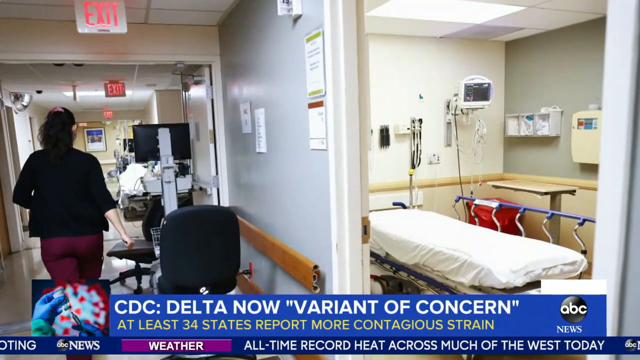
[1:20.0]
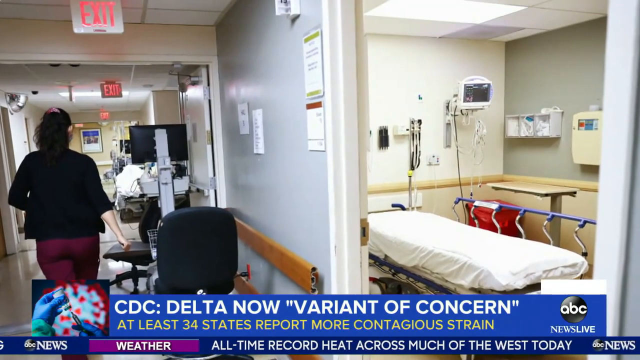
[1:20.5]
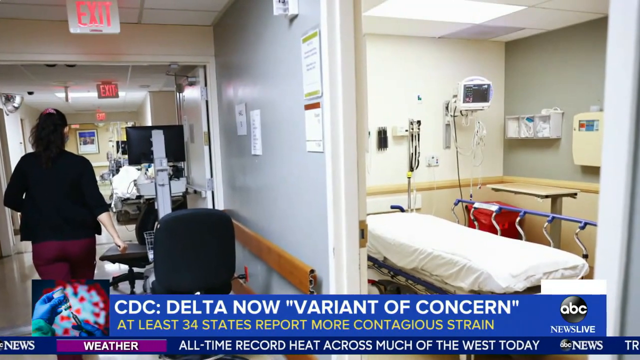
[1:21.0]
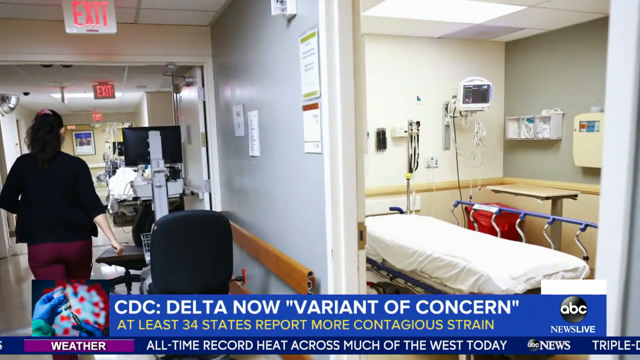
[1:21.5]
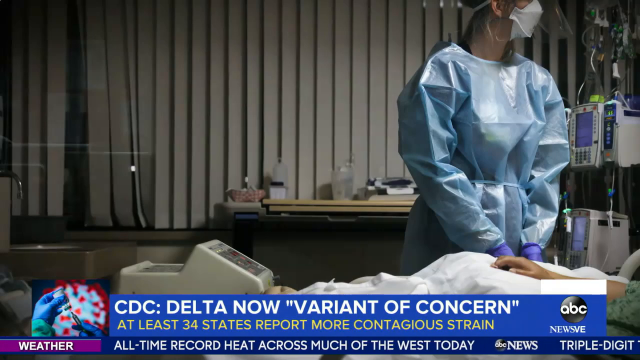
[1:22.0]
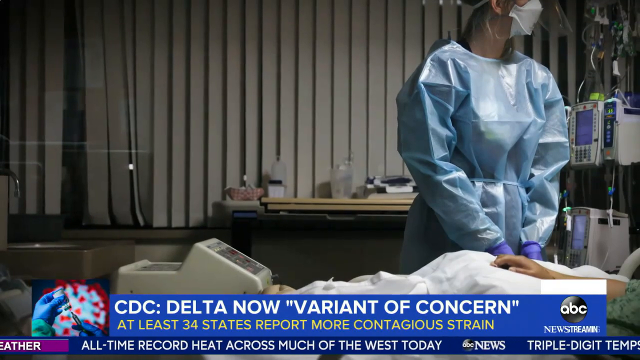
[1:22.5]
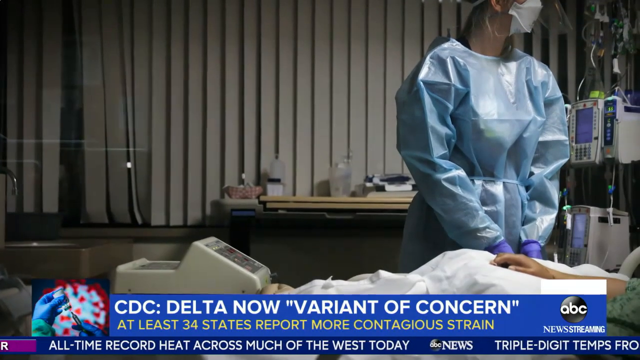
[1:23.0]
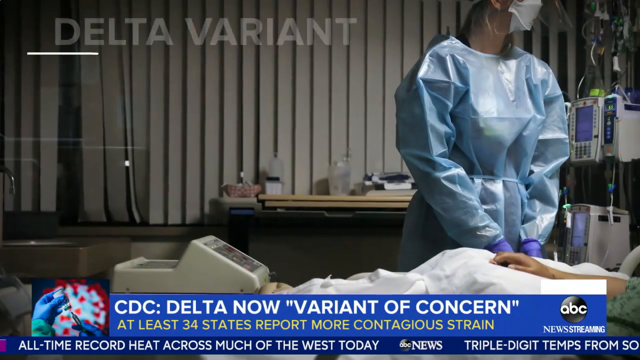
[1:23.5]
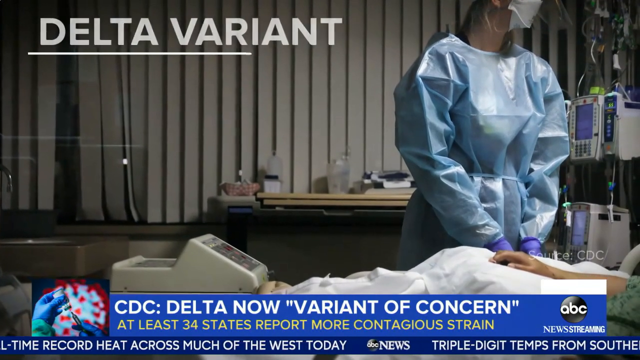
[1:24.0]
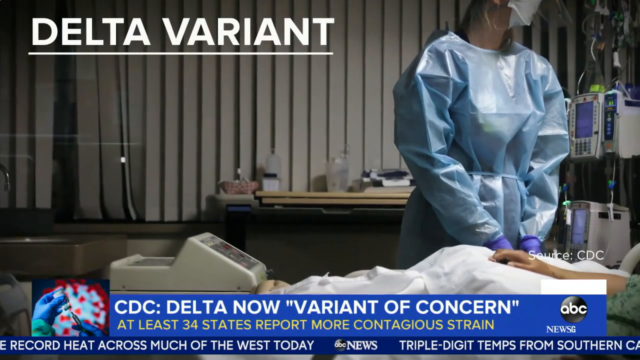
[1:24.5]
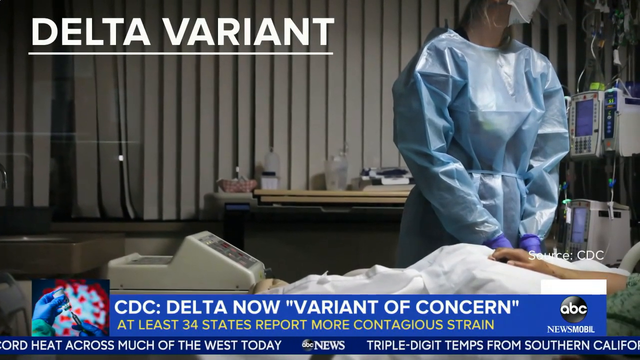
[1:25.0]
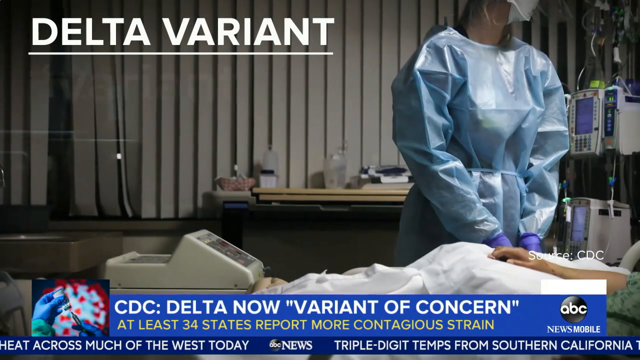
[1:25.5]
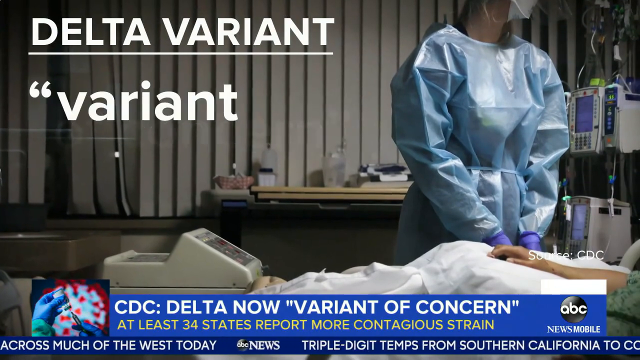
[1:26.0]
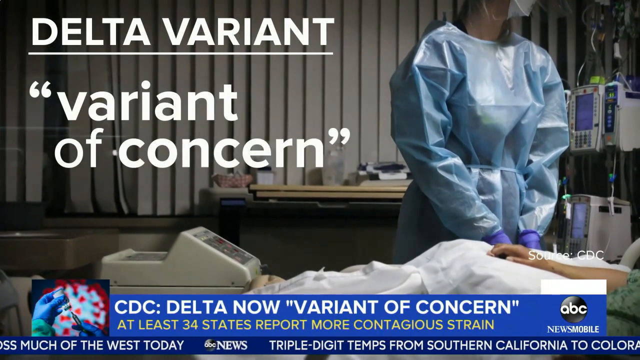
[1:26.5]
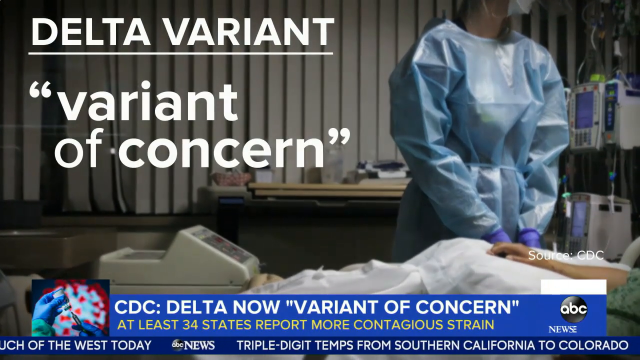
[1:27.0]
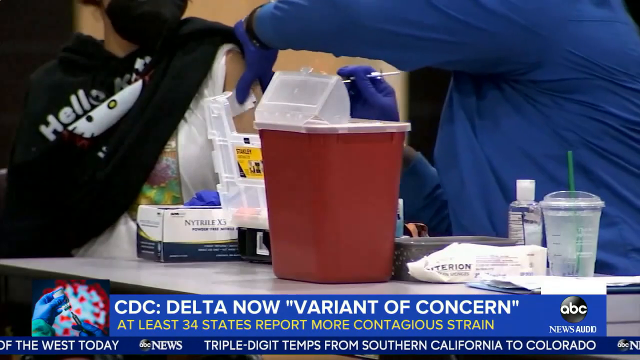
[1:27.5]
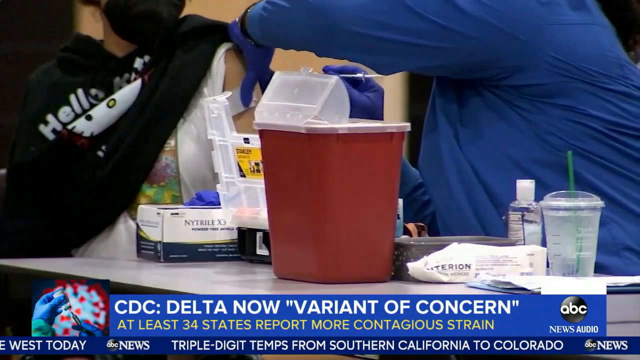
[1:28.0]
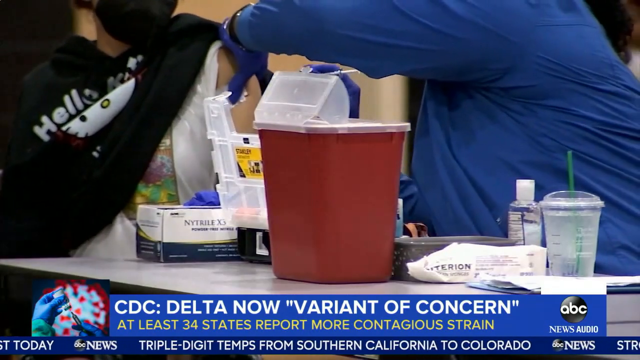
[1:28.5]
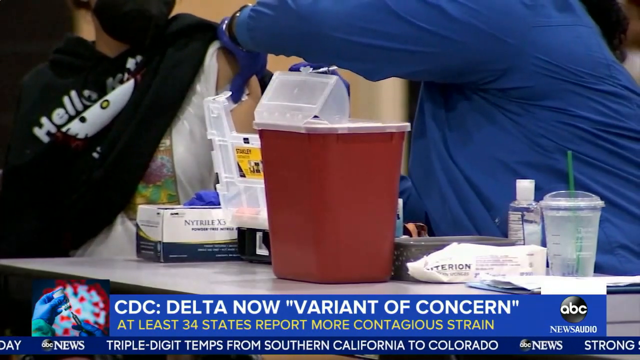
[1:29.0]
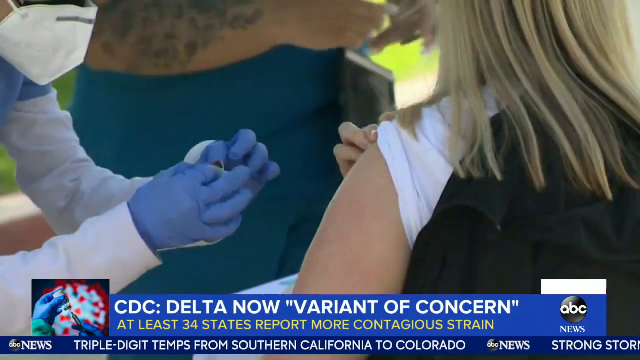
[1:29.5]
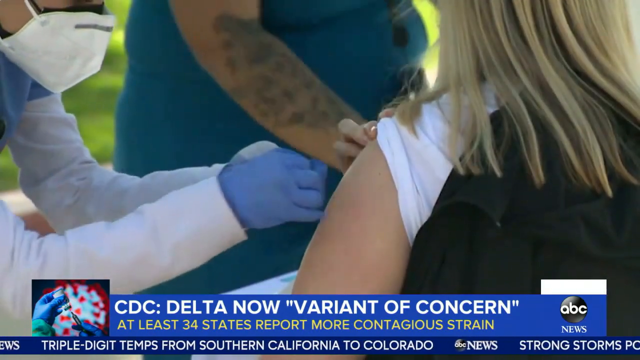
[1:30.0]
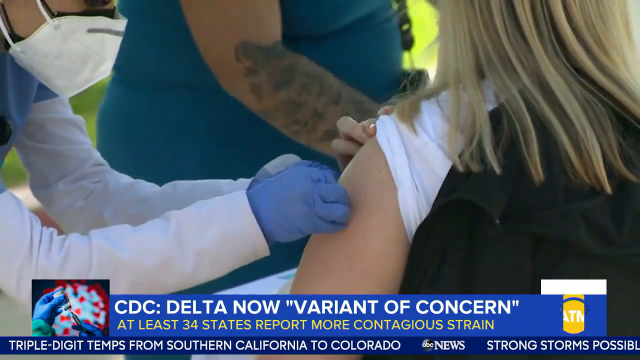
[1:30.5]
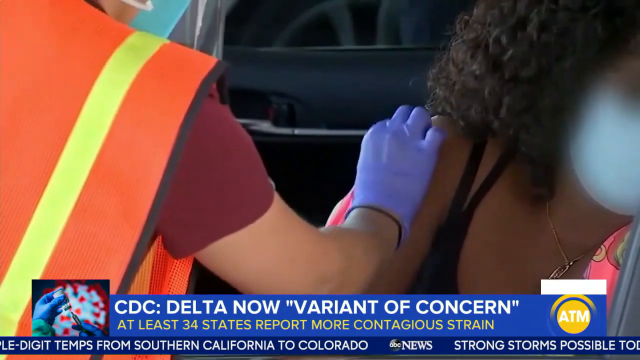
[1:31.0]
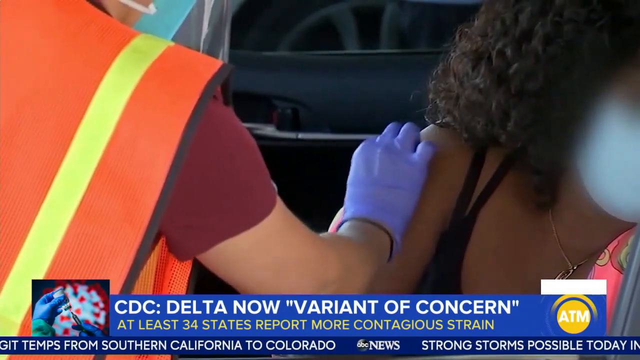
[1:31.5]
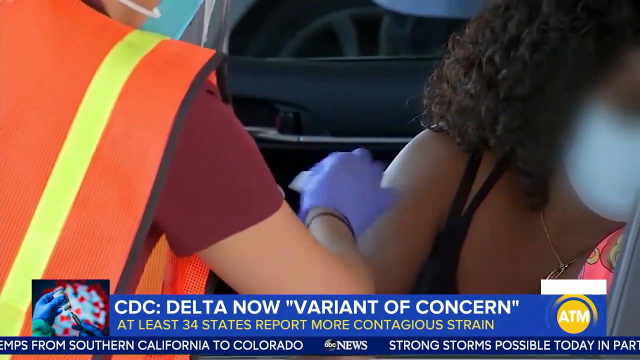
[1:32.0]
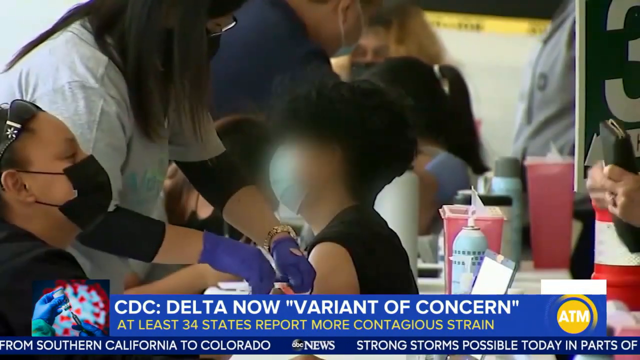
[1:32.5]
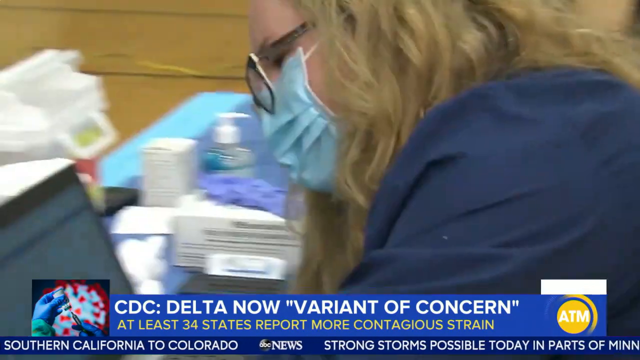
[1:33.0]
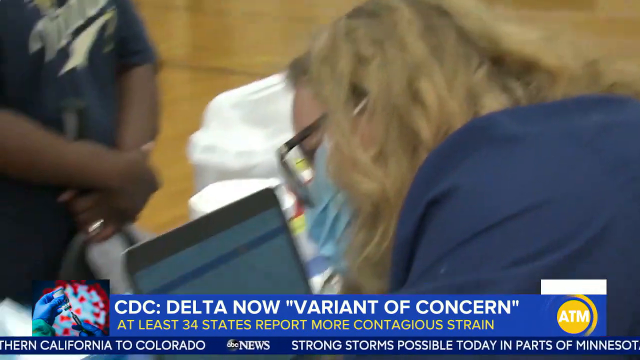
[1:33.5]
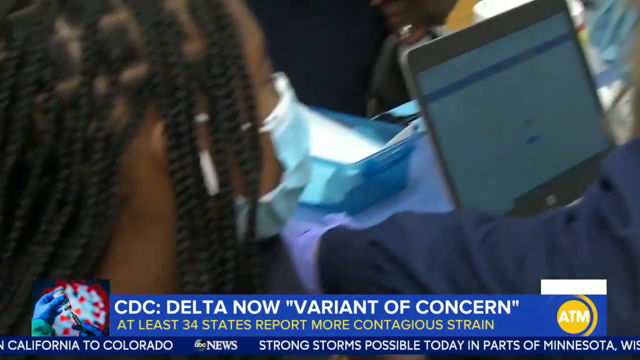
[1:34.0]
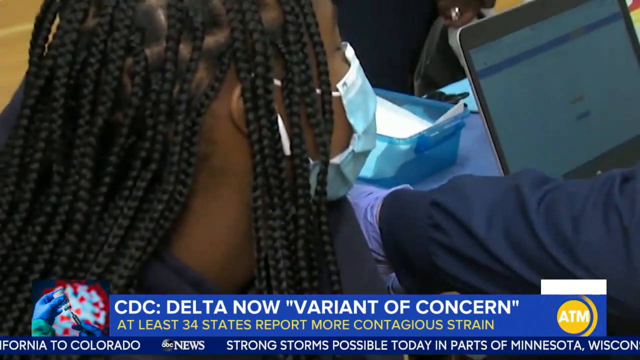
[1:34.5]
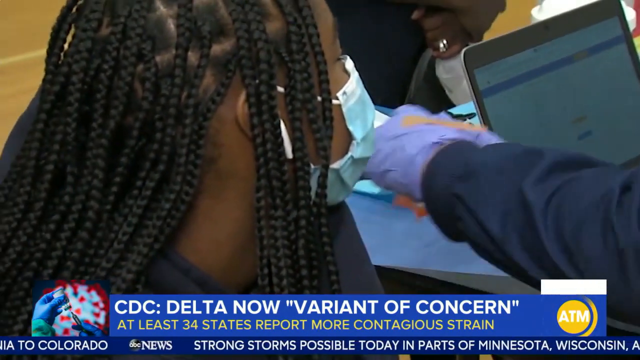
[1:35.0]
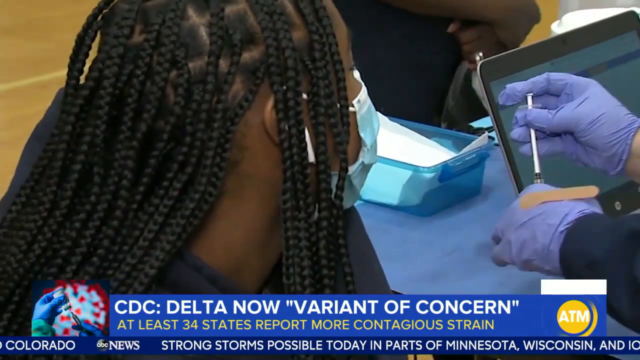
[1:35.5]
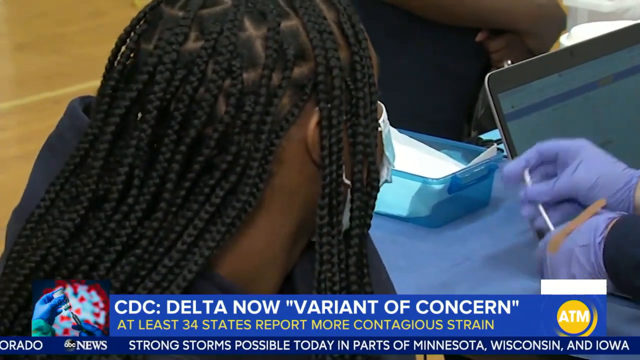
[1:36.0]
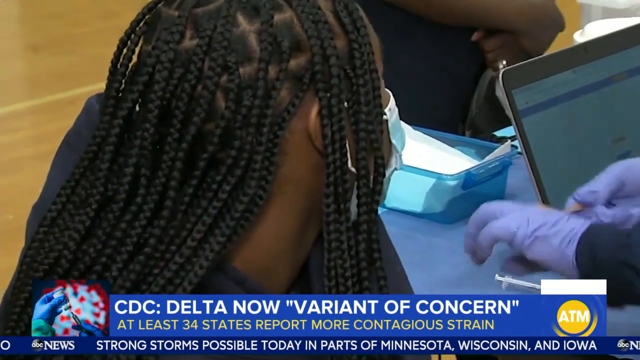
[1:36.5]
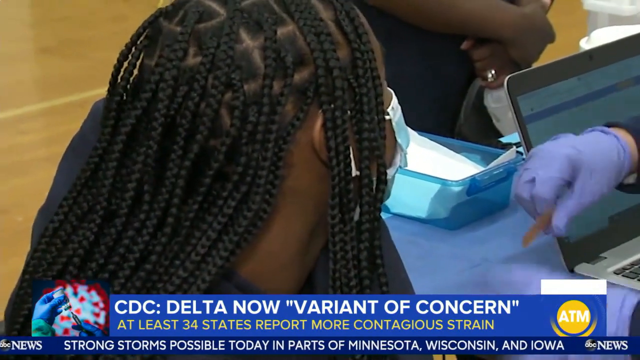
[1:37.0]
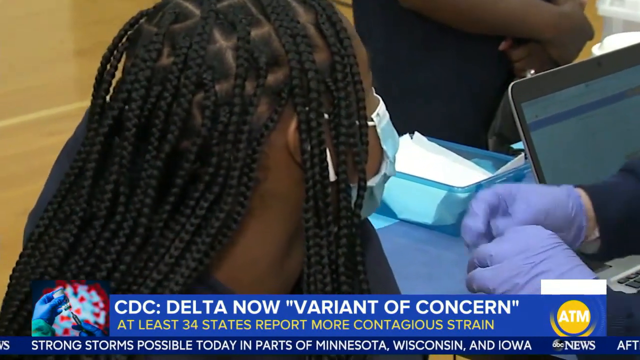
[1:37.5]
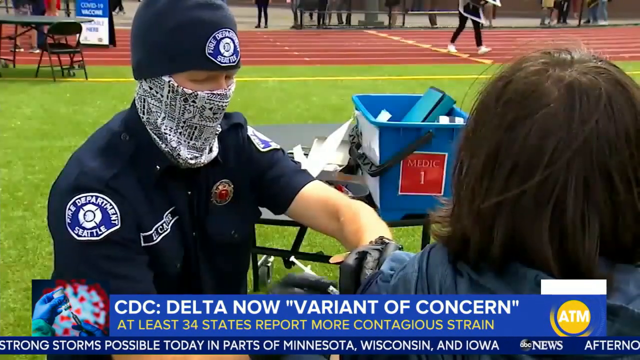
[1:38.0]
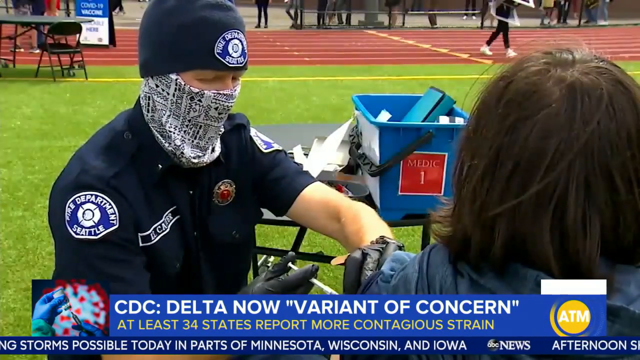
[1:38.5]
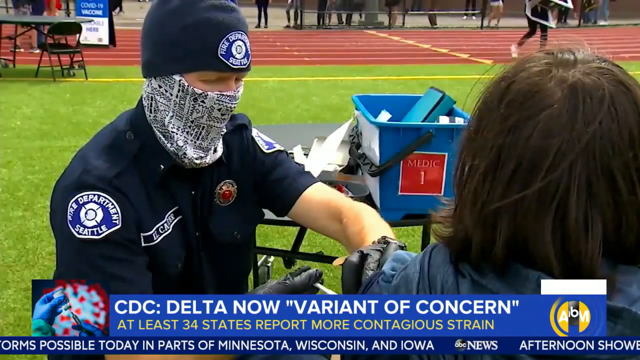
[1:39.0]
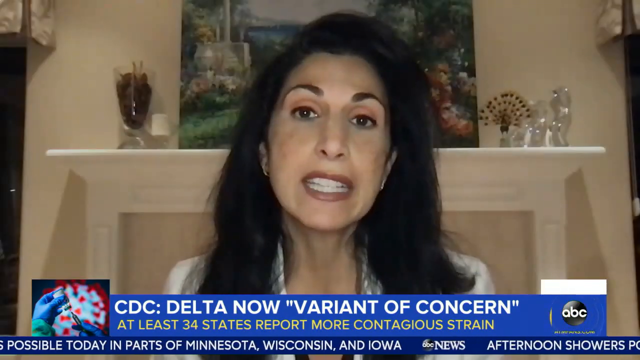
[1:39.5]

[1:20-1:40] A hospital bed is inside a room, and on the left side a nurse walks down a hall, wearing a black jacket and scrubs. Text at the bottom of the screen reads "CDC Delta now variant of concern." The video cuts to a person lying in a hospital bed while a person stands over them wearing what looks like a blue protective cover over their clothes and a white mask; they seem to be staring at a corner of the room. White text appears at the top left reading "Delta variant of concern." The video cuts to somebody administering a shot to another person, then quickly cuts through different images of people getting vaccine shots in different locations, including a field and what looks like a basketball court. It then cuts to what looks like a news reporter wearing a white blouse; behind her is a chimney with white trim and a painting on top of the chimney.